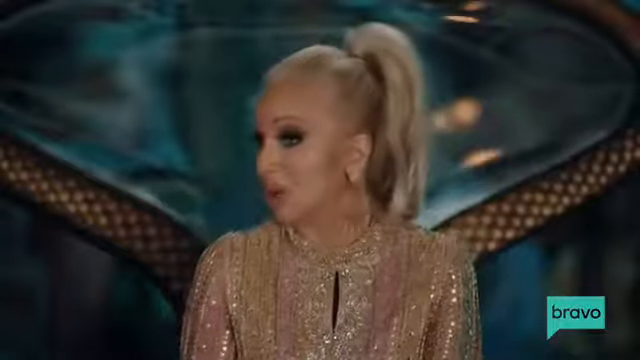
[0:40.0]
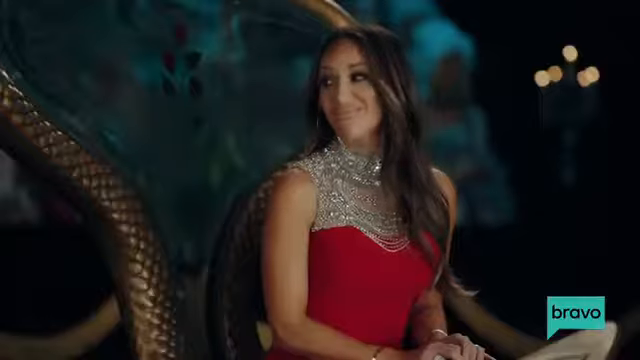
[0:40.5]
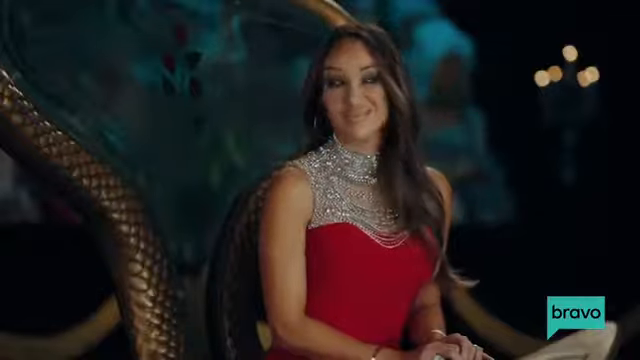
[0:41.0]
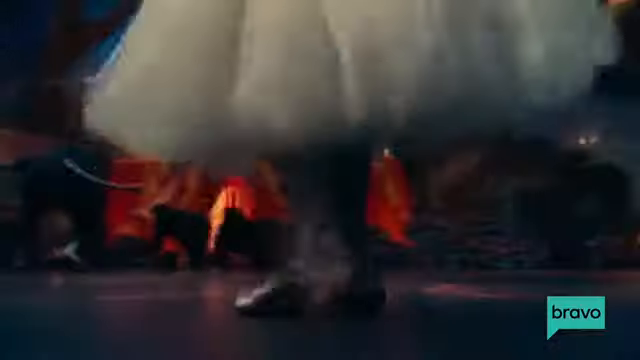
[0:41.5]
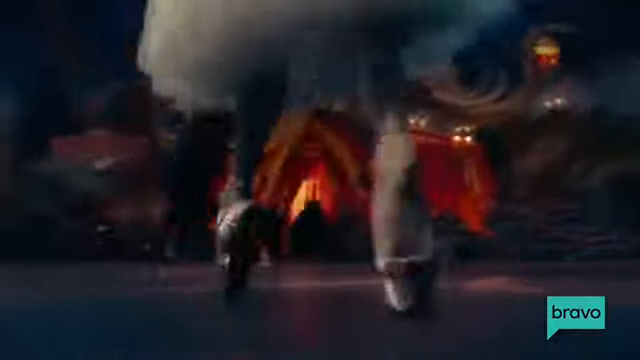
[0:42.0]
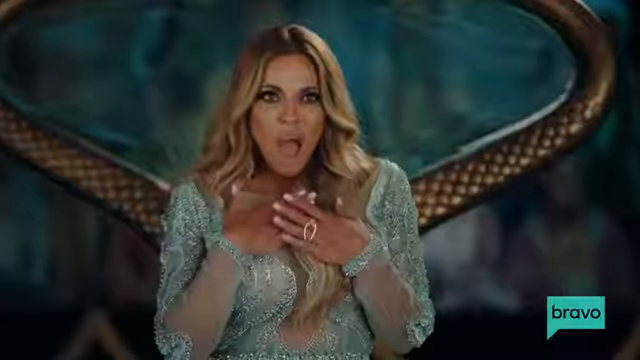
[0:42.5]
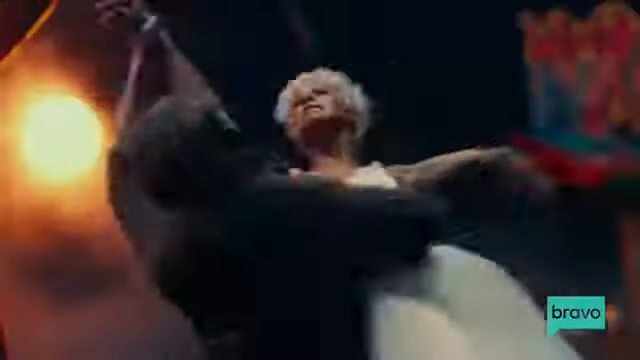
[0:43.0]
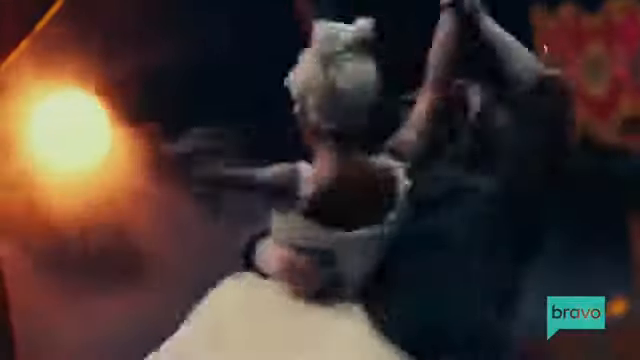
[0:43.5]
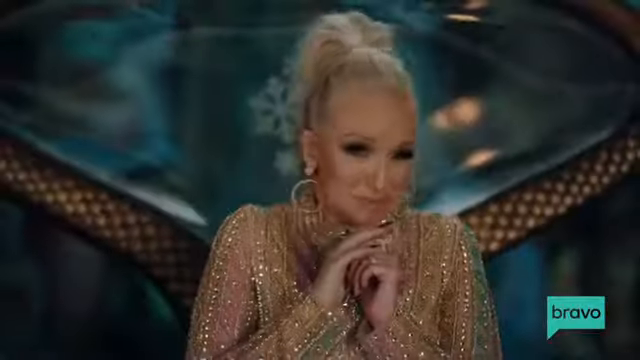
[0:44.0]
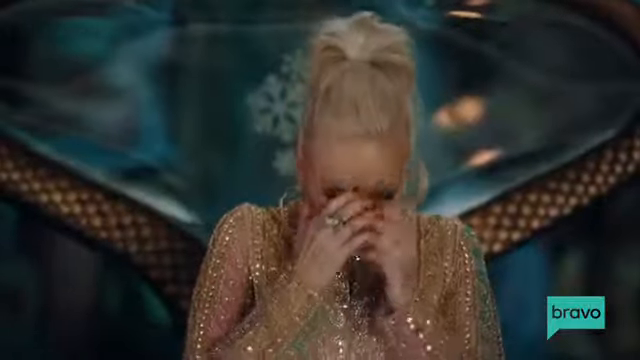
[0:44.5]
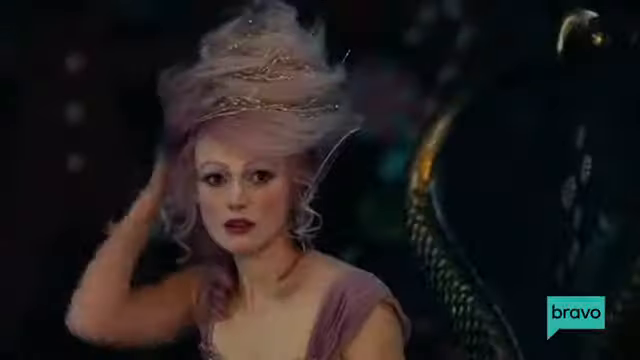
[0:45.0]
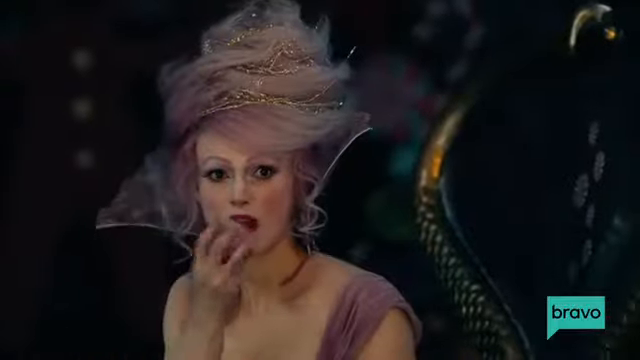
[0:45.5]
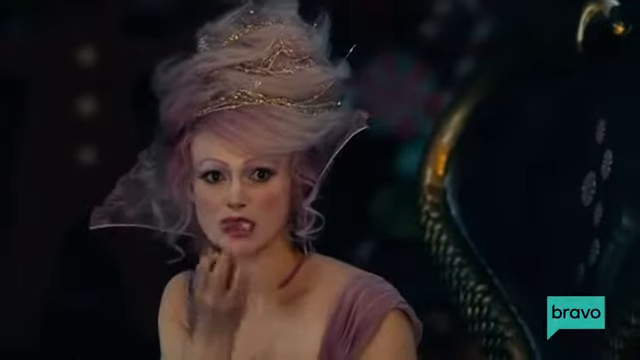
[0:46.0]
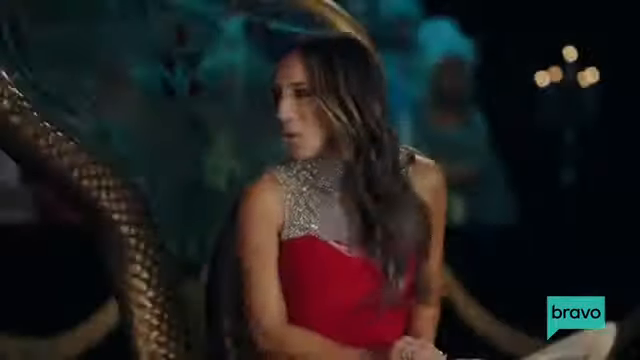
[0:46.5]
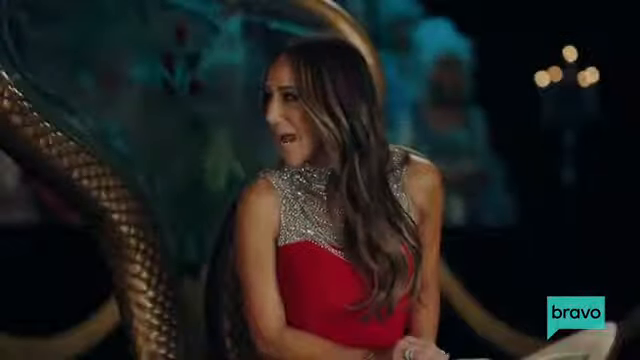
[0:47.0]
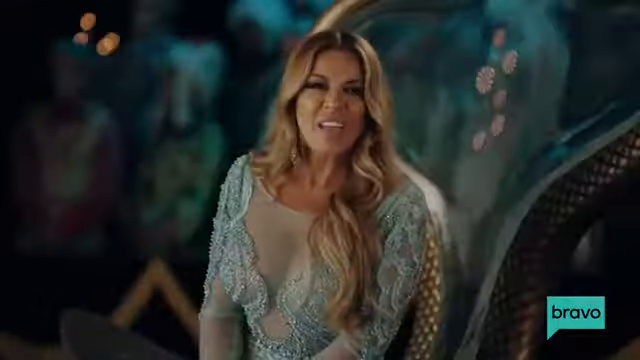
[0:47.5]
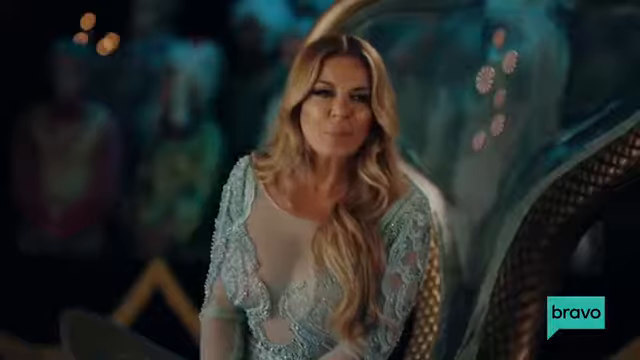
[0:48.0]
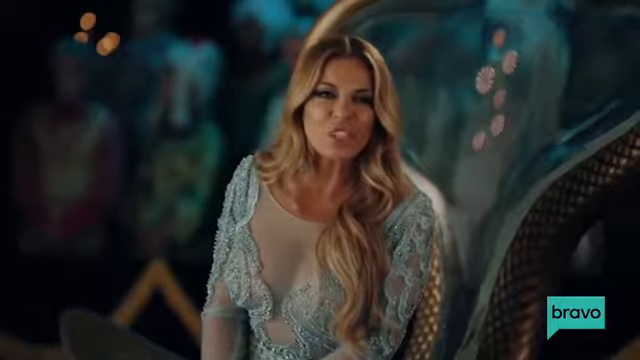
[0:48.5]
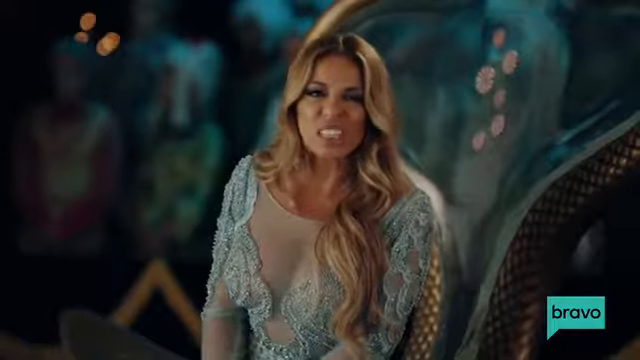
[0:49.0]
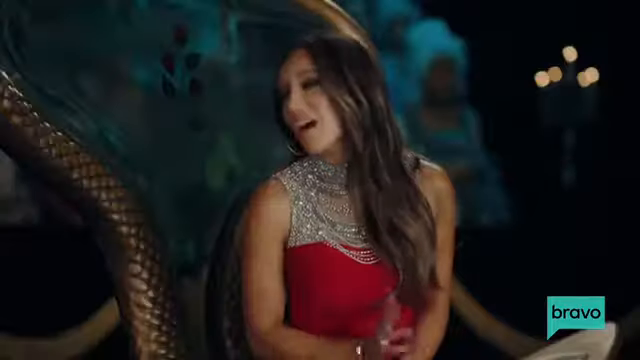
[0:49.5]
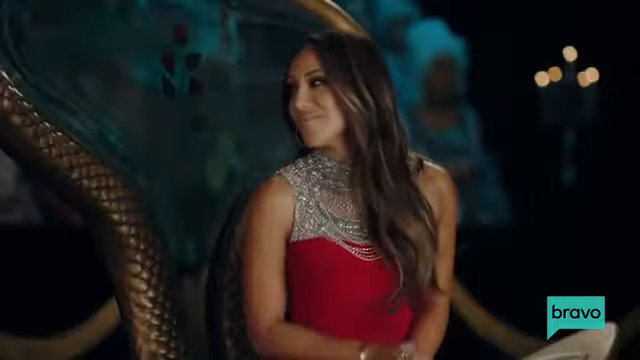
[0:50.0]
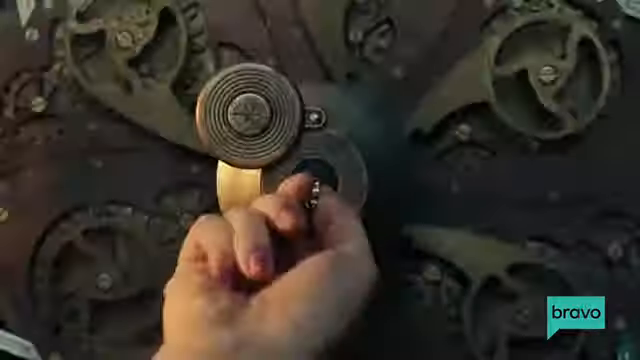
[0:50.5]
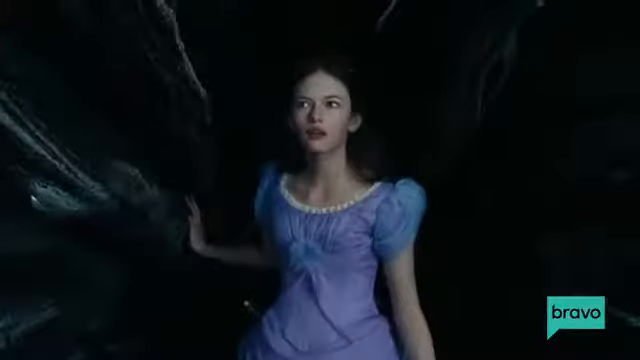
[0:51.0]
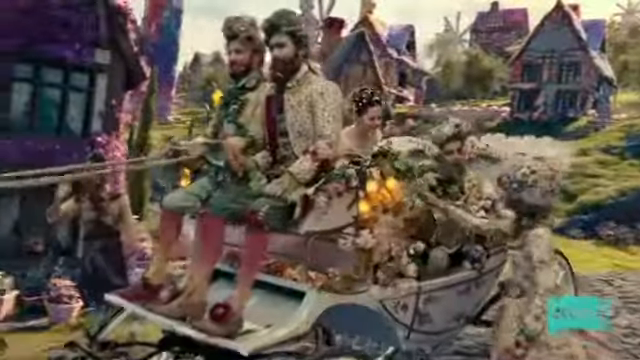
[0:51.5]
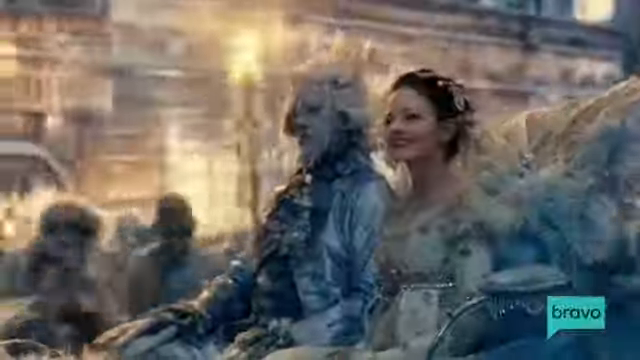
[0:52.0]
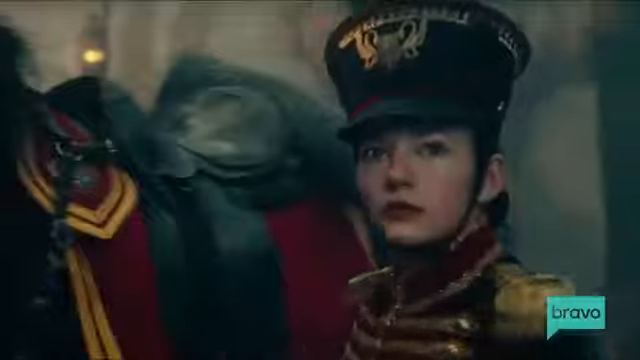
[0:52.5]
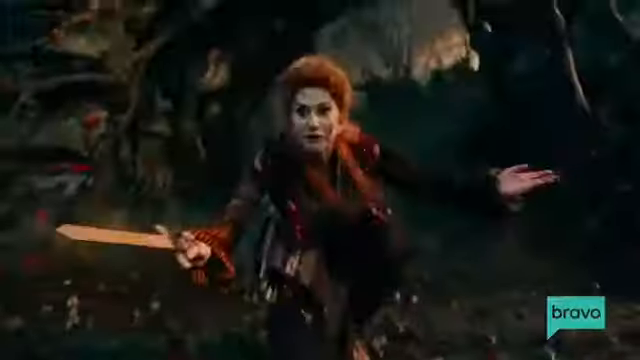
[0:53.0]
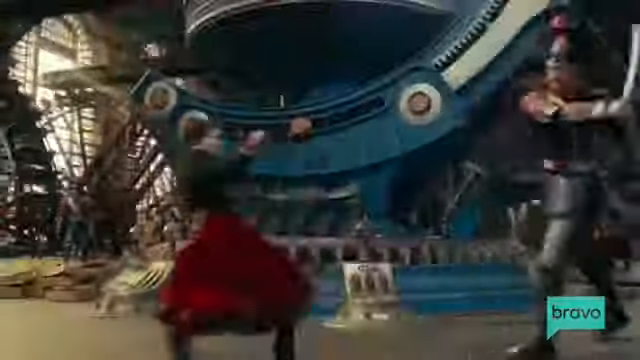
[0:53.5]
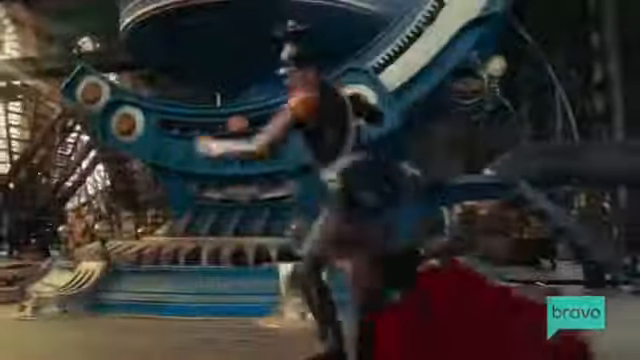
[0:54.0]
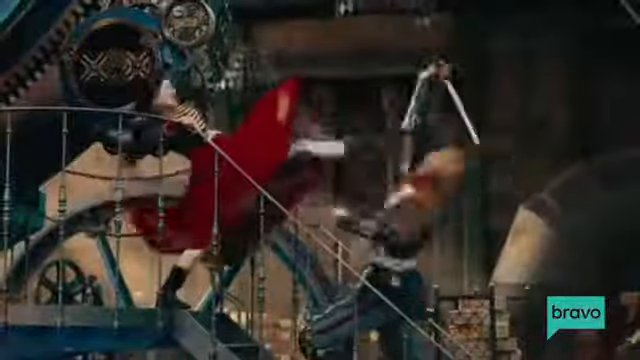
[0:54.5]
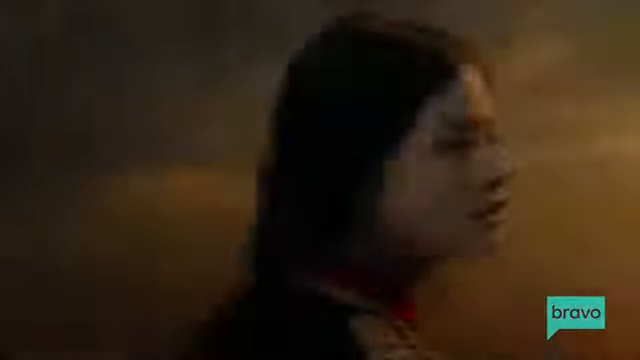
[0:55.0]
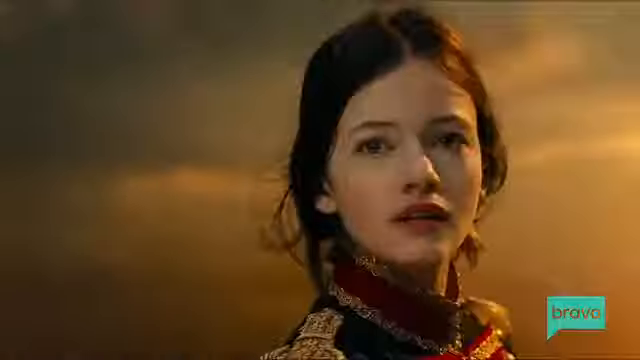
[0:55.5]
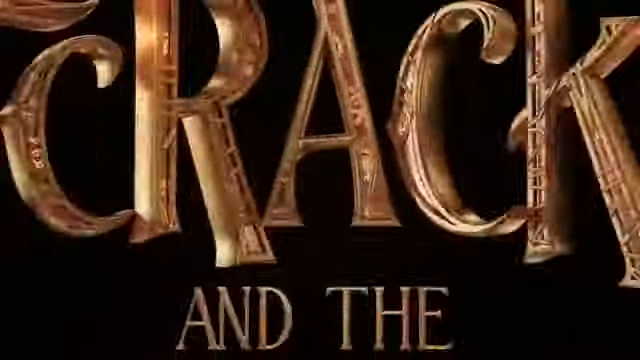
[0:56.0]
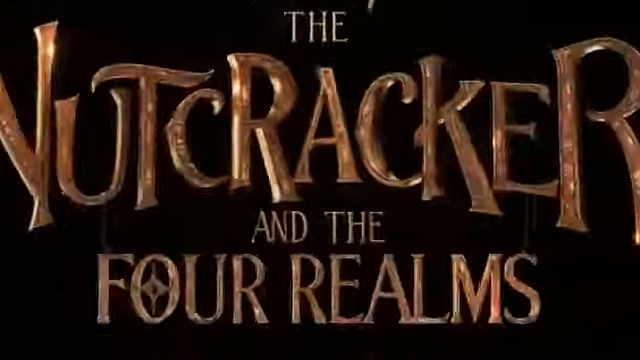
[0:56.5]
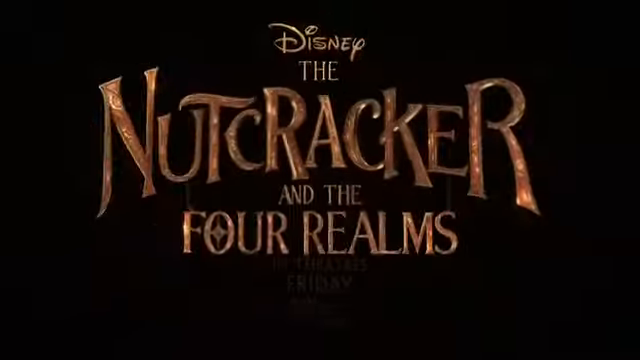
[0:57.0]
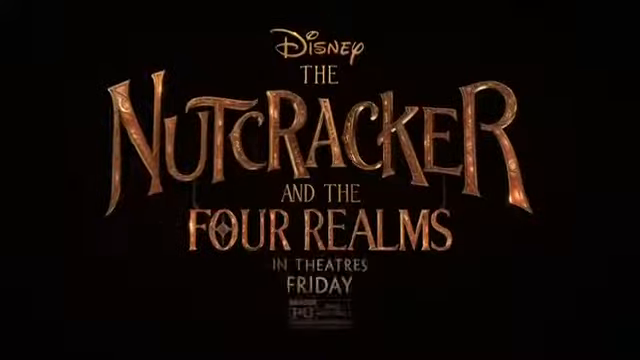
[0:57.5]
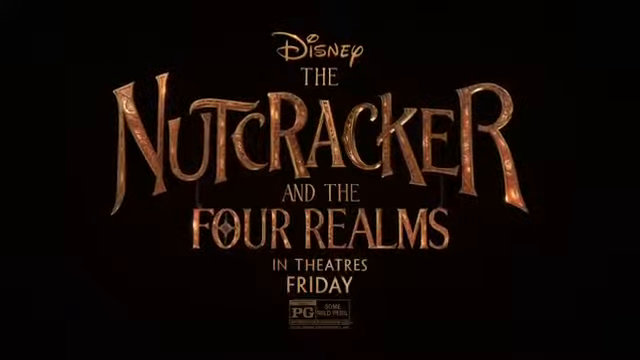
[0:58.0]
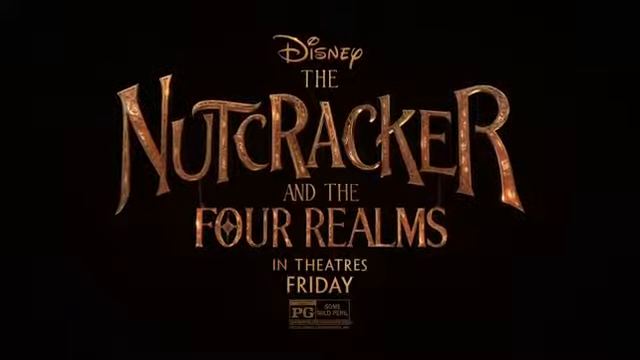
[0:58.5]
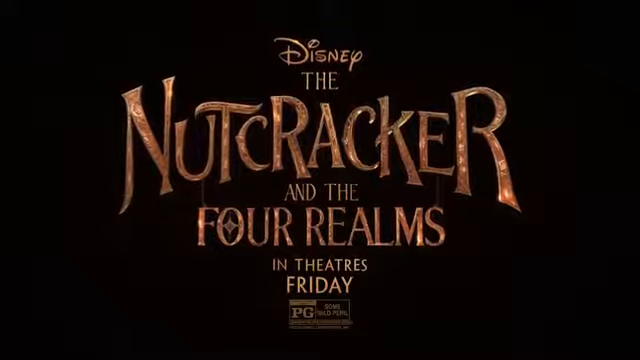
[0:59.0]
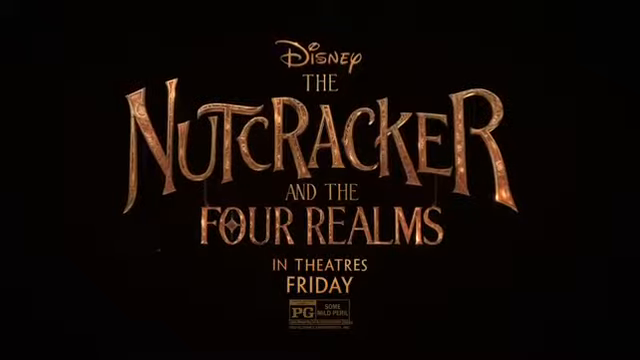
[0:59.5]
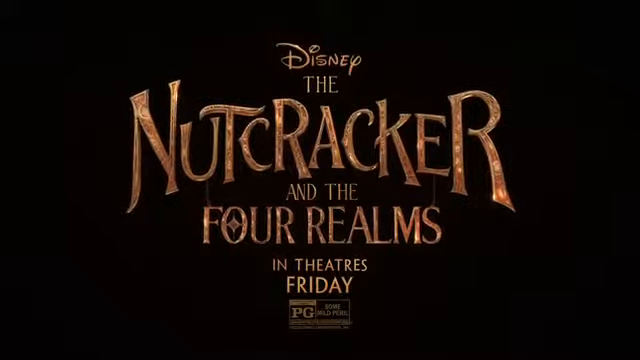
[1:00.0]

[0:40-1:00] More Housewives footage is followed by Nutcracker footage showing just a ballerina's feet moving up and down. One of the Housewives puts her hands over her chest with a very shocked look on her face, as if she can't believe what she just saw. In more Nutcracker footage, a ballerina is twirled around by one of the black mouse-like characters. Another Housewife appears to be hiding her face in her hands, as if she doesn't want to see what is happening. The mystical-looking woman is eating what looks like either popcorn or cotton candy, chewing it in apparent disbelief. Two of the Housewives are shown, and they appear to be arguing. Clips from the Nutcracker movie follow: a bunch of people fighting with swords, and a woman turning toward the camera. The video then cuts to the title screen again, which reads "The Nutcracker and the Four Realms in Theatres Friday, P.G."